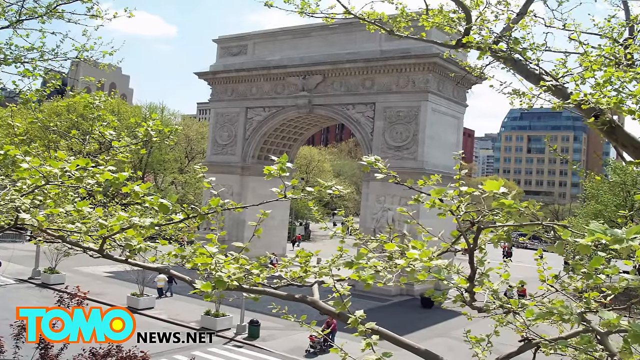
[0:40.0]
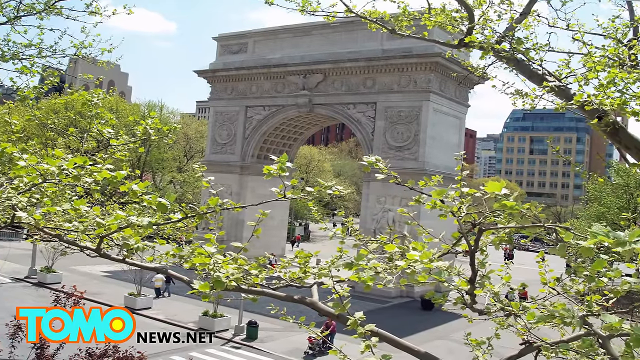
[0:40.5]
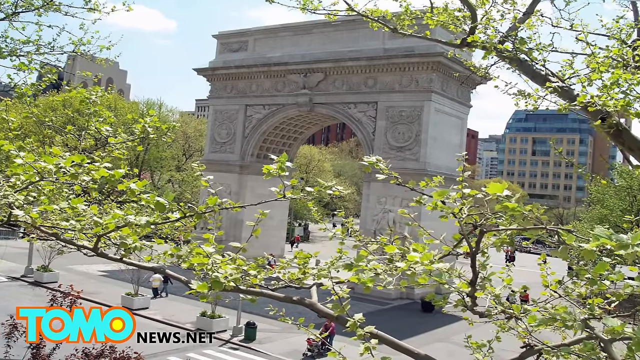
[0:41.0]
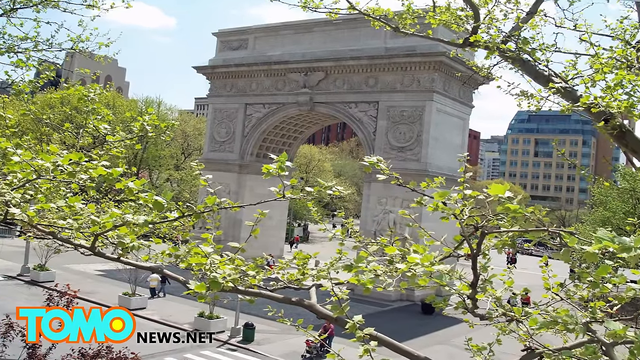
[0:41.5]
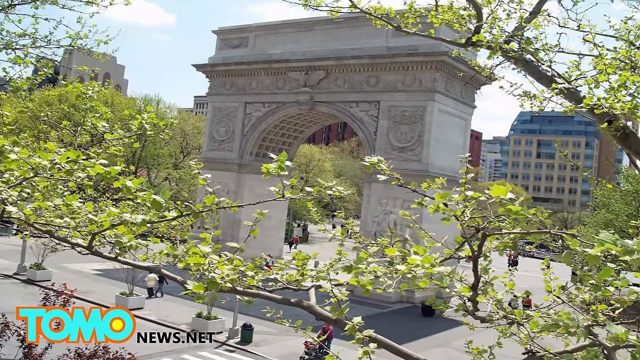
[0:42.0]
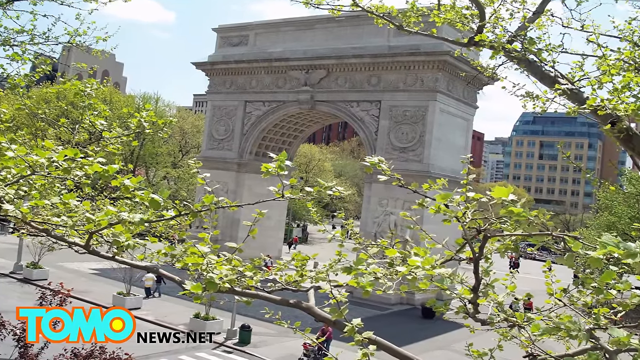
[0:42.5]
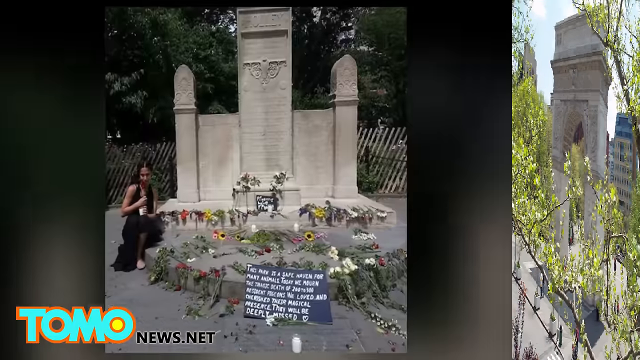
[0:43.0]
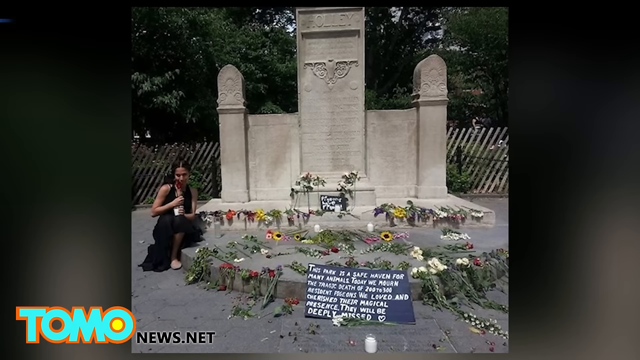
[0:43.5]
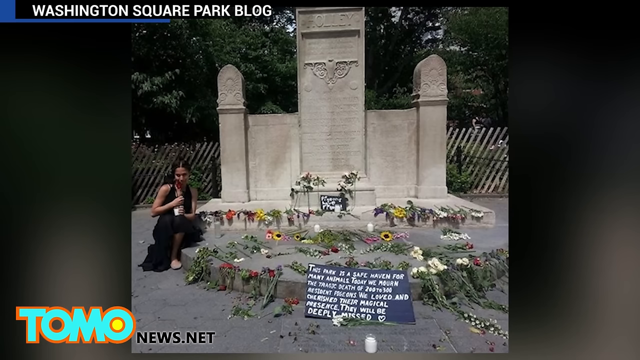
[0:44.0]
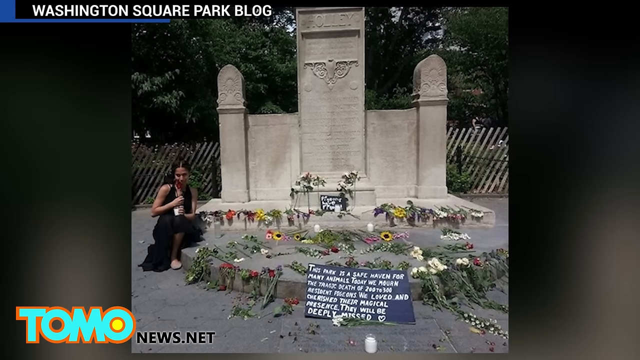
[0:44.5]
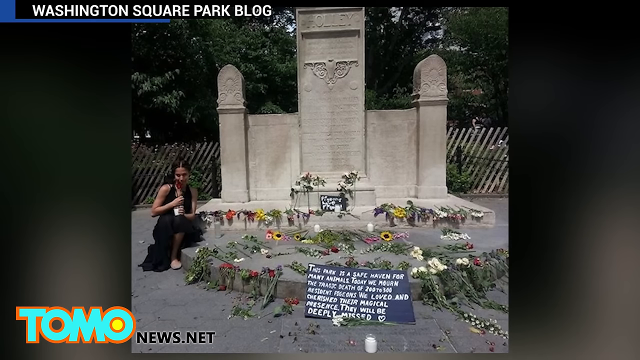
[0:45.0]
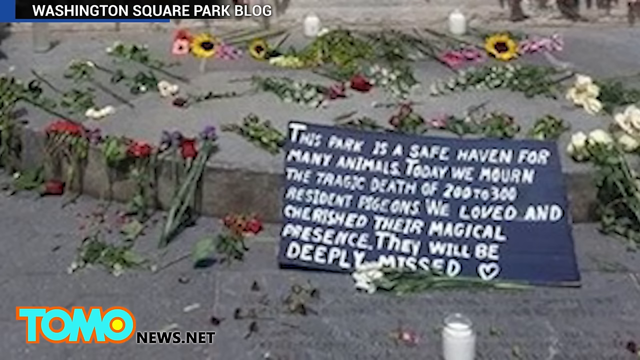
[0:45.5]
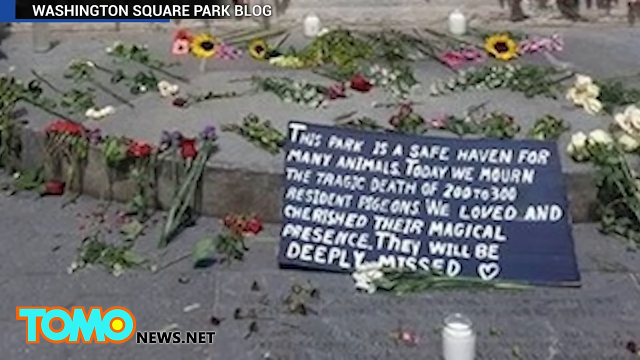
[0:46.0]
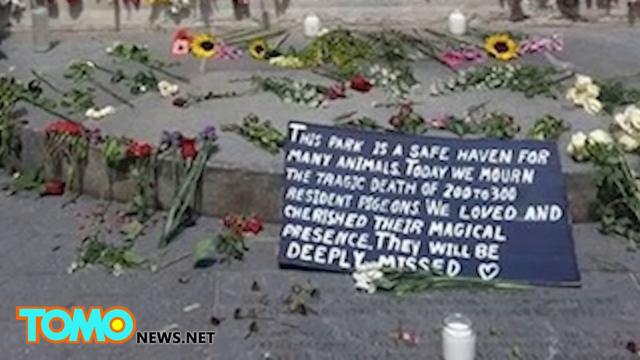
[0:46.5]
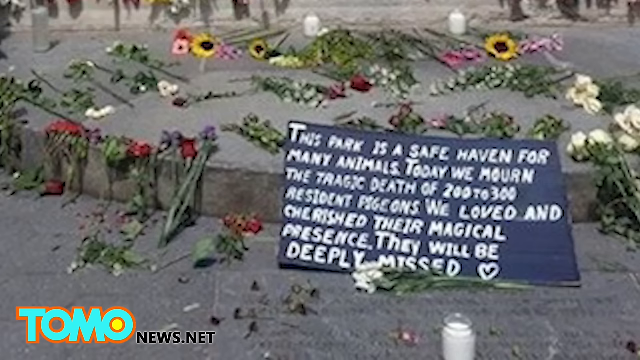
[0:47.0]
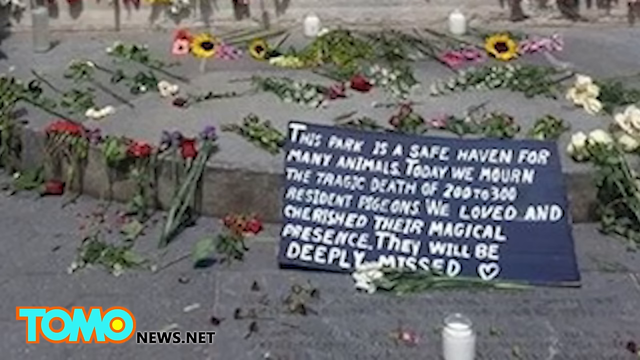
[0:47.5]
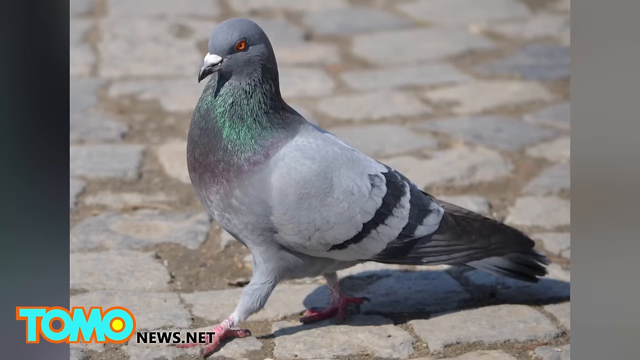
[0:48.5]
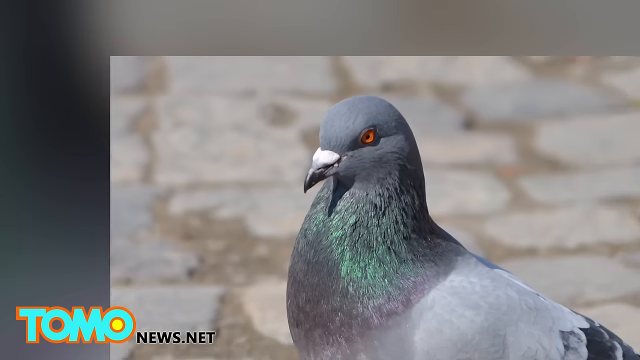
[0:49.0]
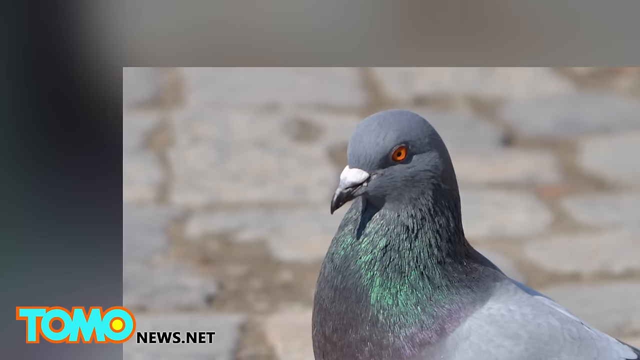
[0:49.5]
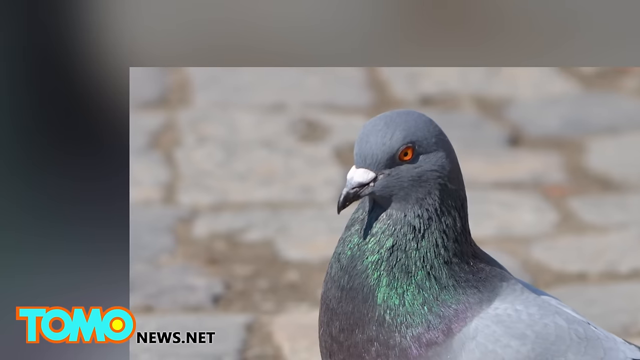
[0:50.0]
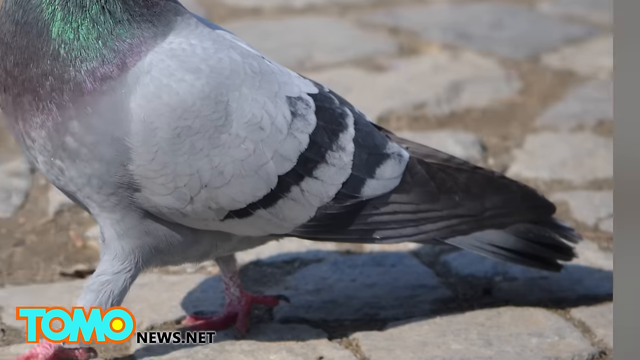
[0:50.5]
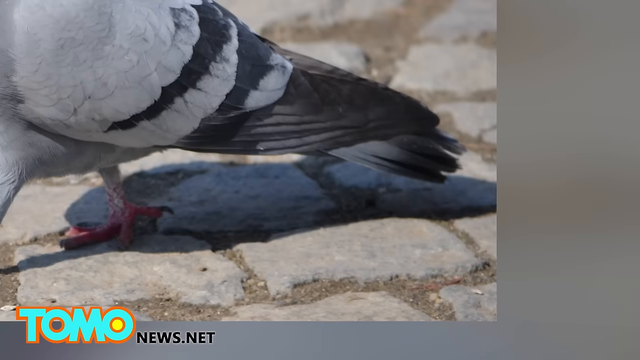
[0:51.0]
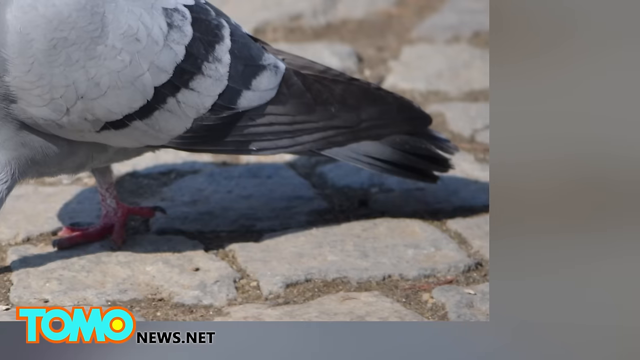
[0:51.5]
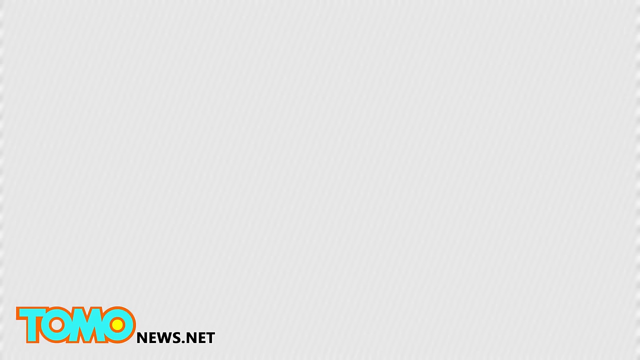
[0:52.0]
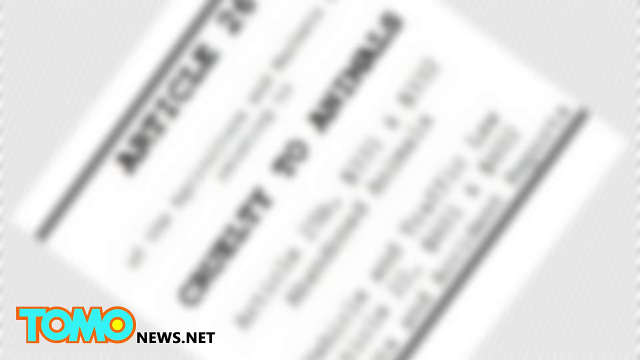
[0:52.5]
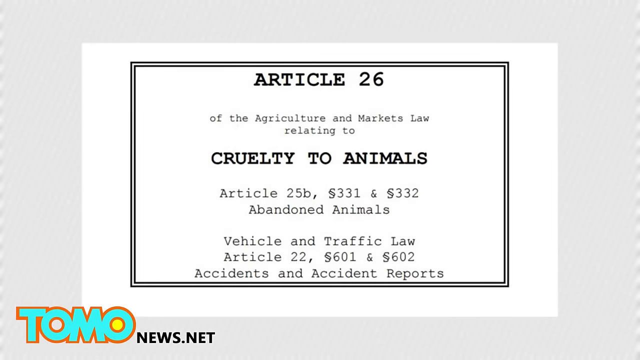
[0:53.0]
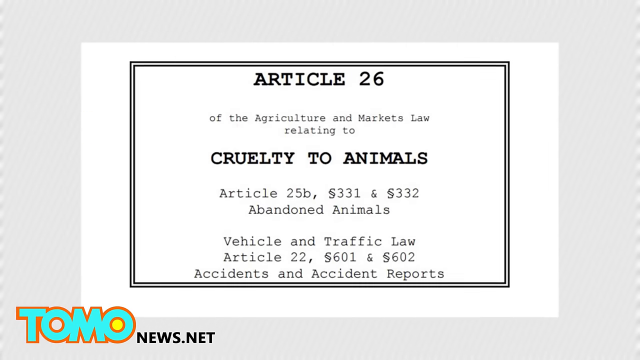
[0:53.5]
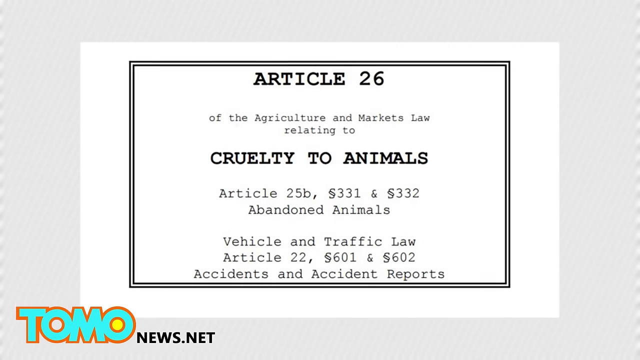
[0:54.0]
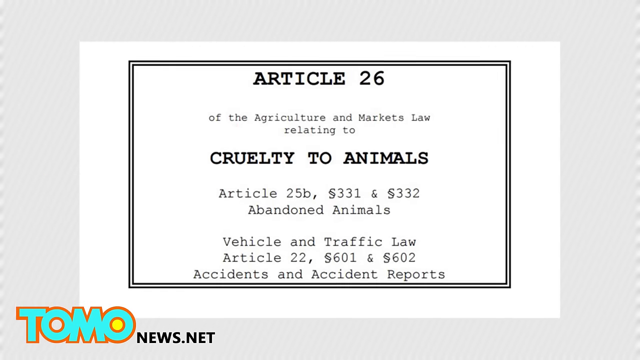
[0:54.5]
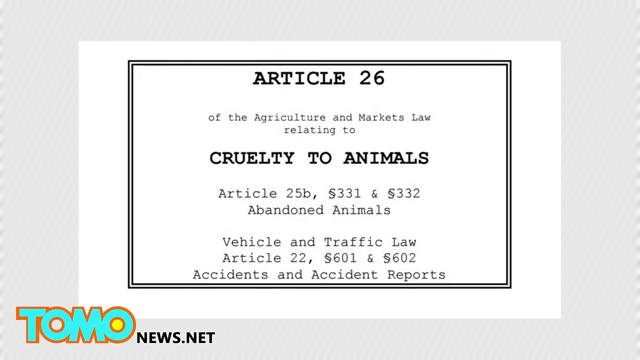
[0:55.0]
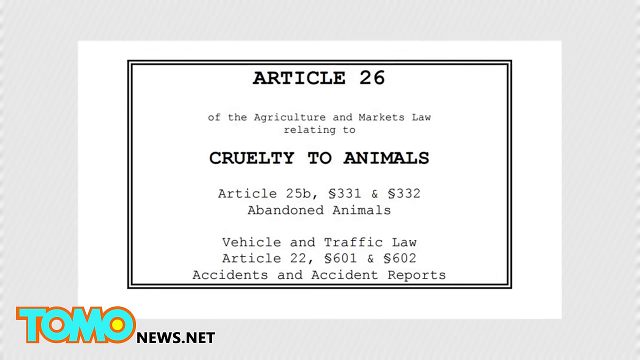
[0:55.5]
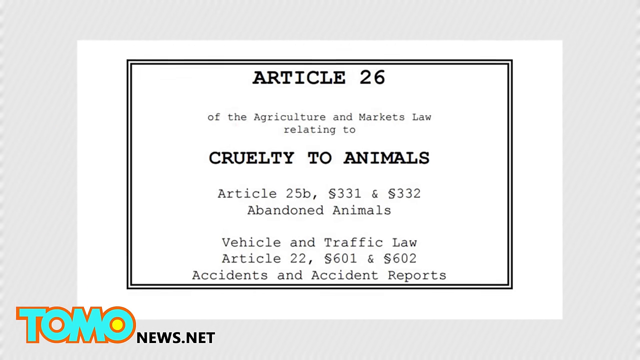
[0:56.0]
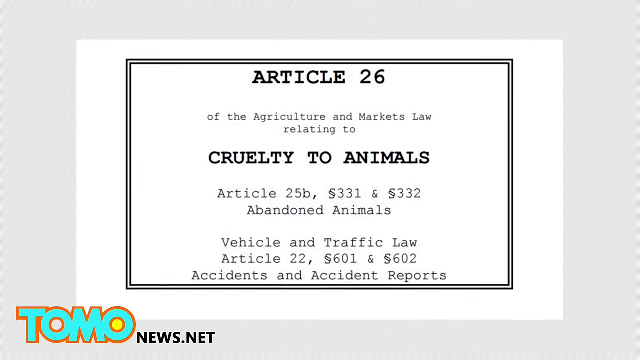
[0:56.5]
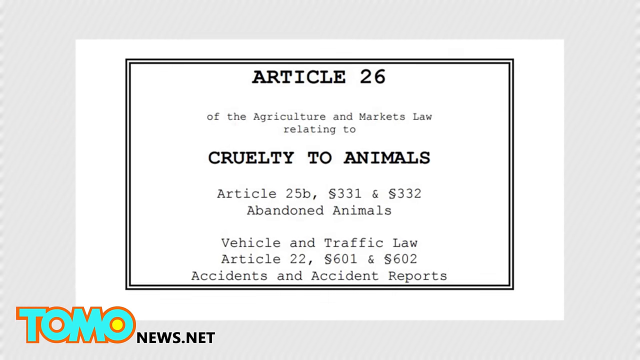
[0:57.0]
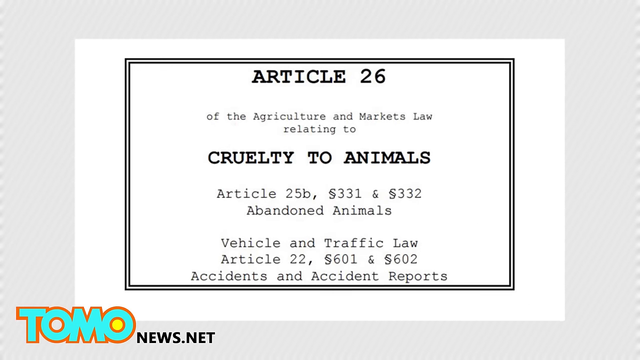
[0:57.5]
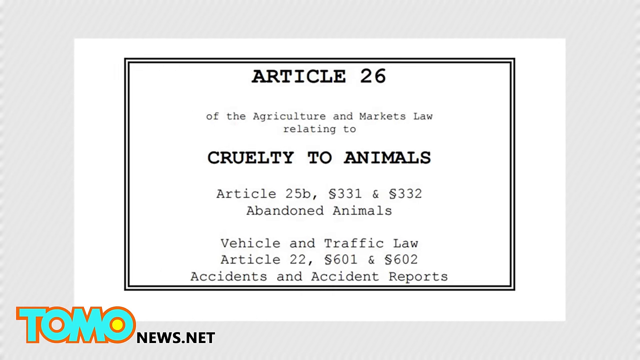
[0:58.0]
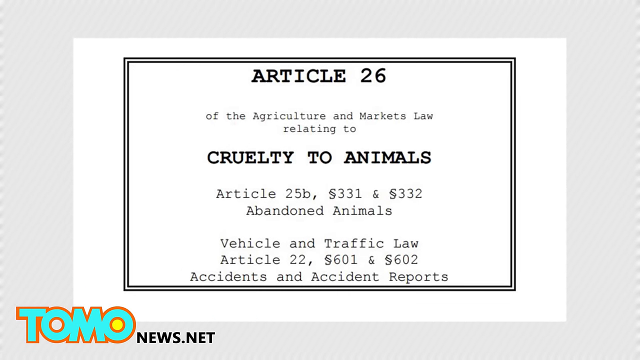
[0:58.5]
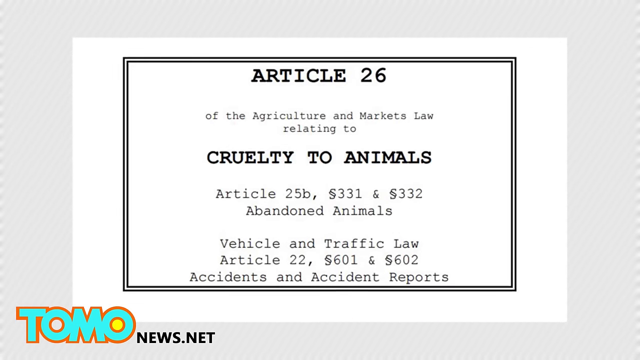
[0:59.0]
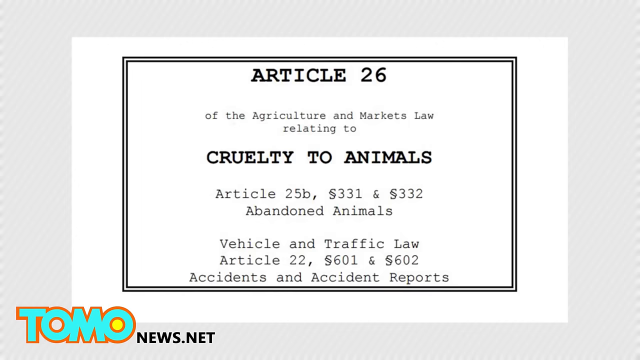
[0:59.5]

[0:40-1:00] The image of the Washington Square arch, surrounded by flowers, continues. A new image then appears with a caption in the top left corner reading "Washington Square Park block". It shows a memorial of some kind, with a woman seated on the side, flowers laid across, and a hand-drawn sign in black with white text. The sign reads "this park is a safe haven for many animals. Today we mourn the tragic death of 200 to 300 resident pigeons. We loved and cherished their magical presence. They will be deeply missed". Another image is then shown, and the camera zooms in on its top left corner and then on its bottom right corner, showing its tail. Next, an image of an article of the agriculture and markets law appears, with a title reading "article 26 cruelty to animals article 25b section 331 and section 332 abandoned animals". This image, black text on a white background, zooms in on screen while the tomonews.net logo remains in the bottom left corner.